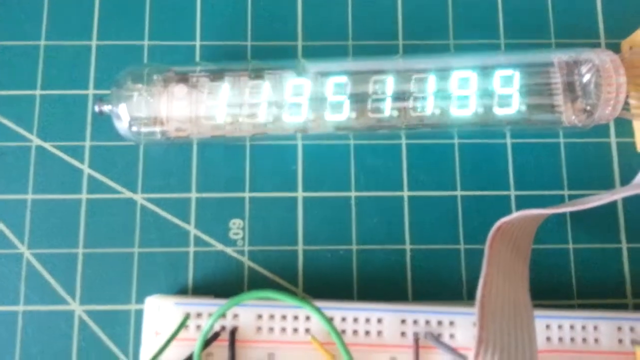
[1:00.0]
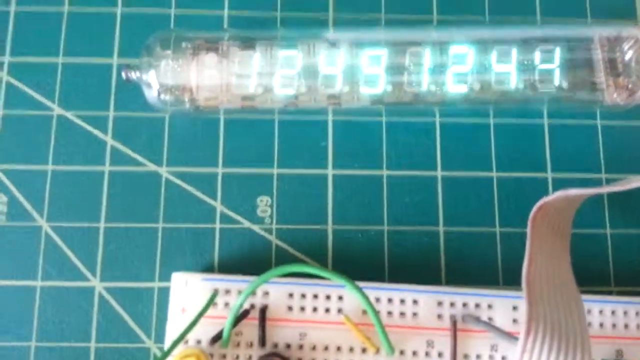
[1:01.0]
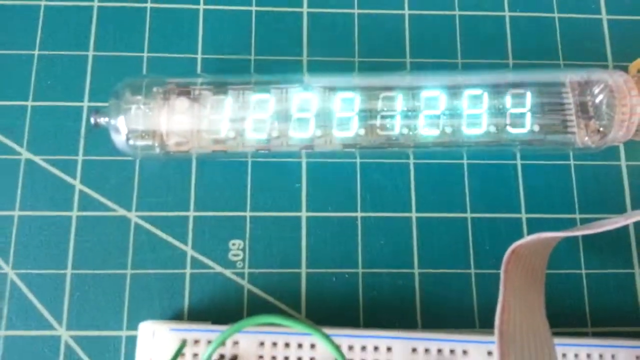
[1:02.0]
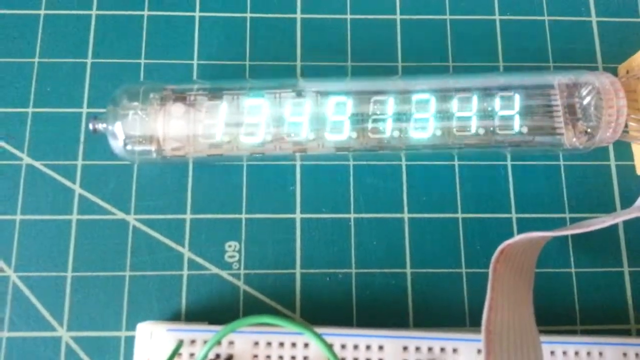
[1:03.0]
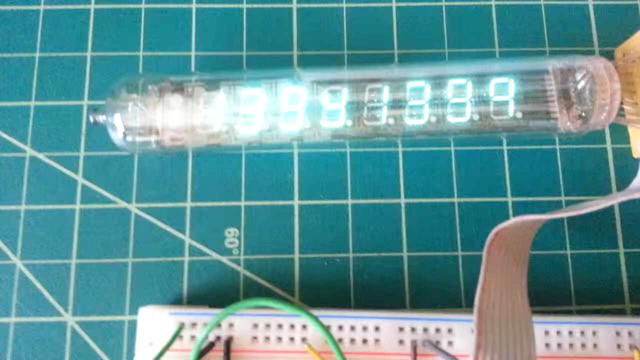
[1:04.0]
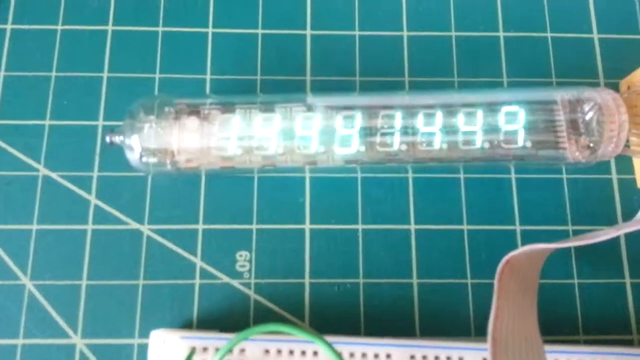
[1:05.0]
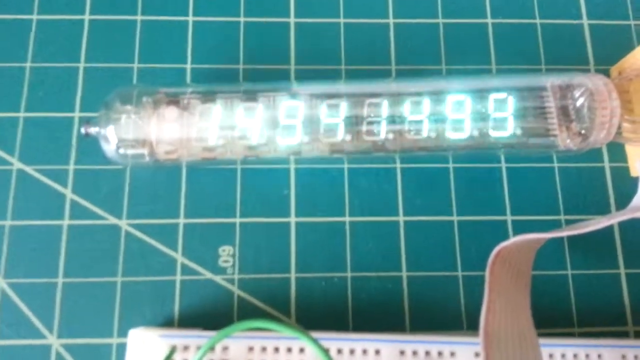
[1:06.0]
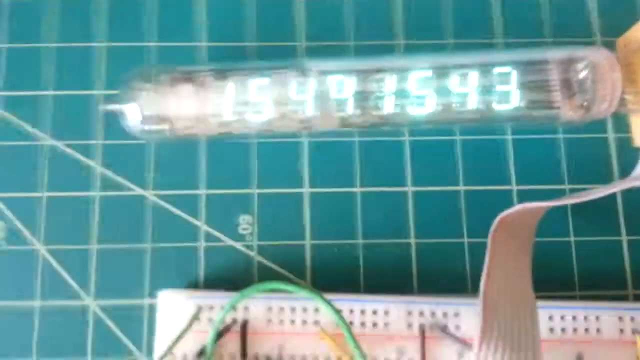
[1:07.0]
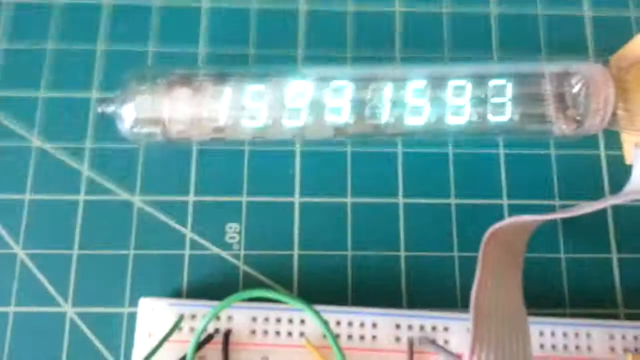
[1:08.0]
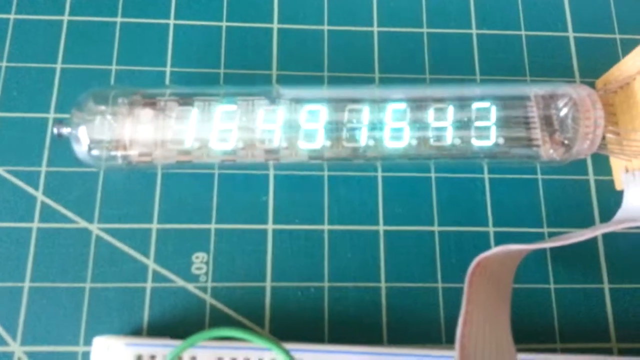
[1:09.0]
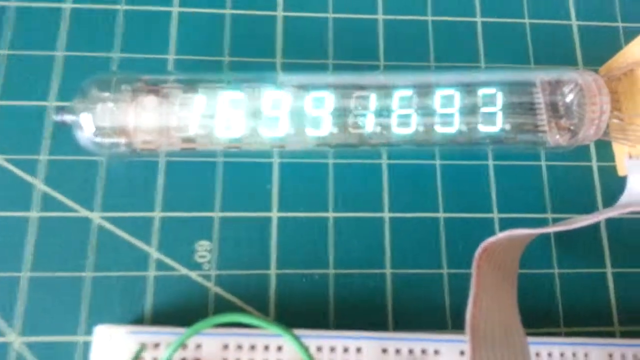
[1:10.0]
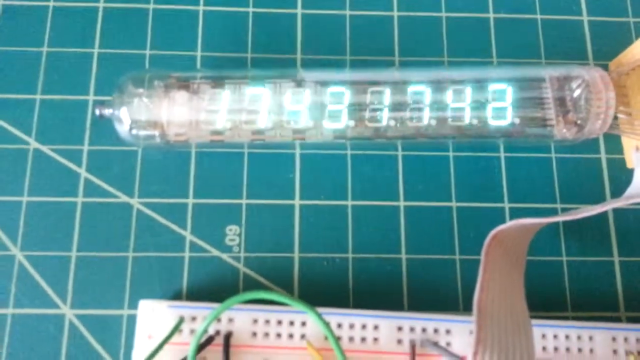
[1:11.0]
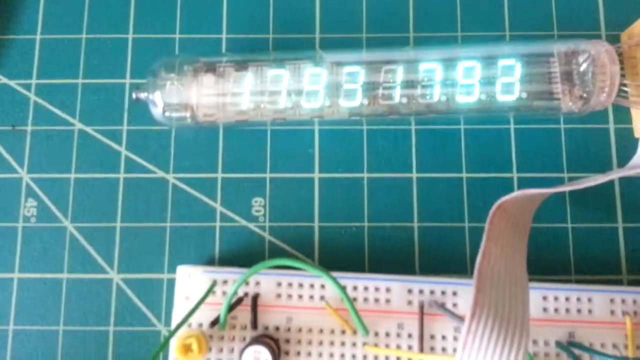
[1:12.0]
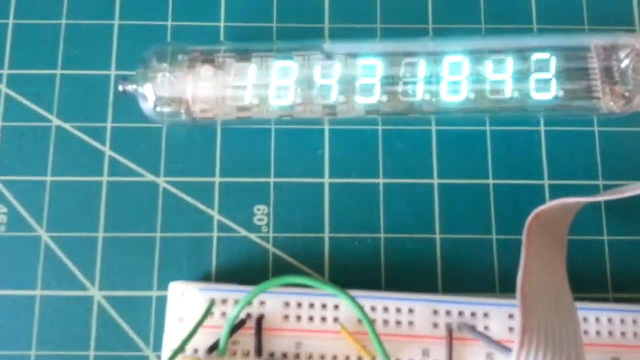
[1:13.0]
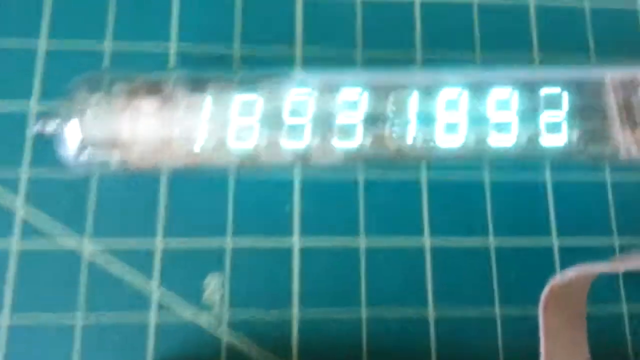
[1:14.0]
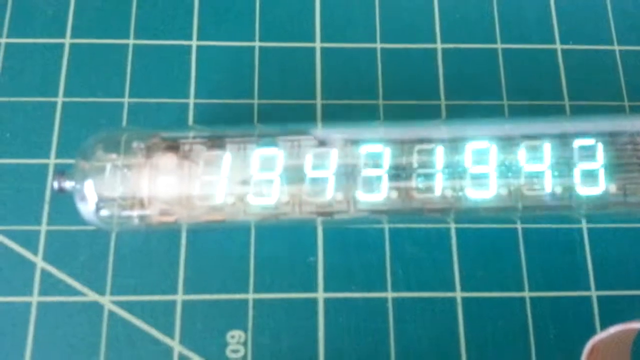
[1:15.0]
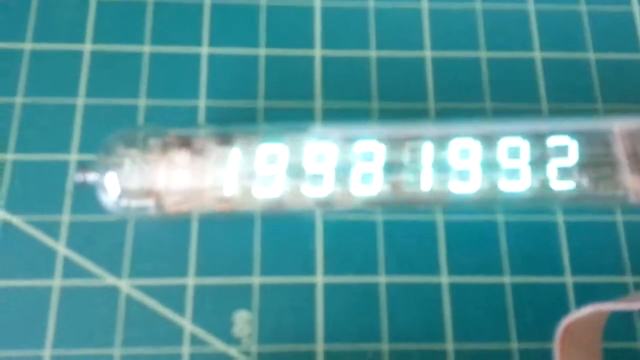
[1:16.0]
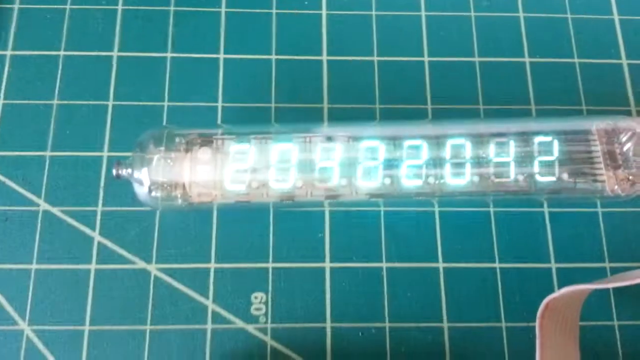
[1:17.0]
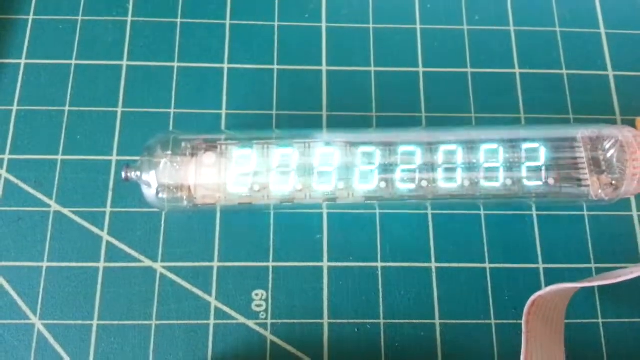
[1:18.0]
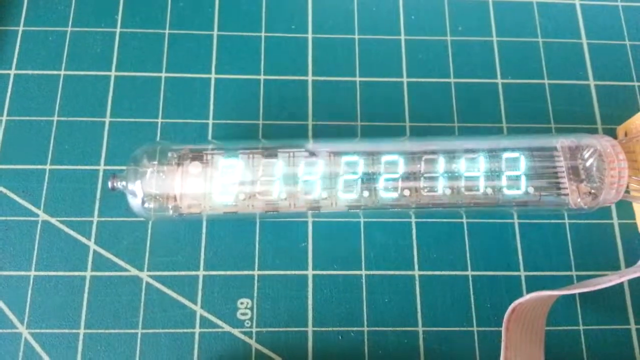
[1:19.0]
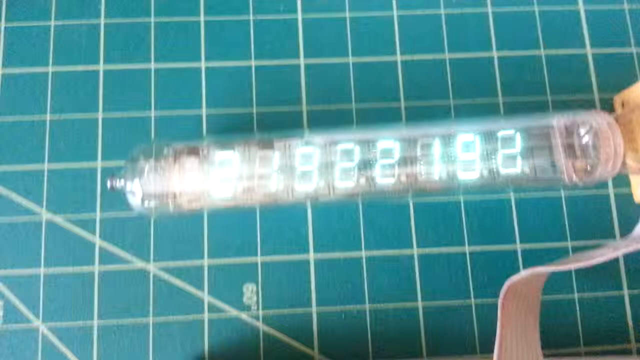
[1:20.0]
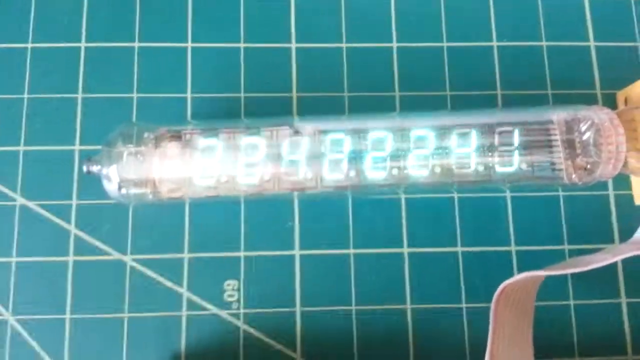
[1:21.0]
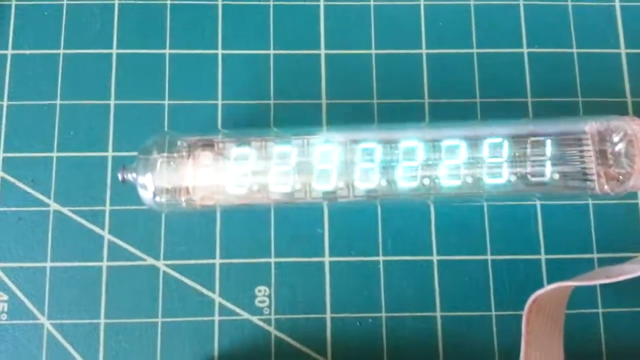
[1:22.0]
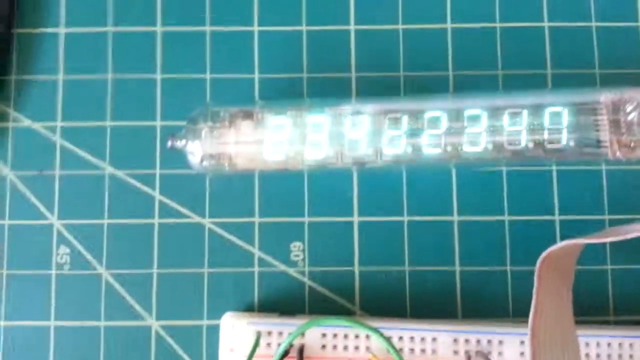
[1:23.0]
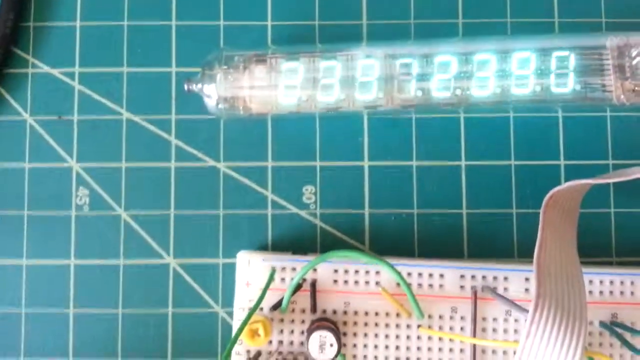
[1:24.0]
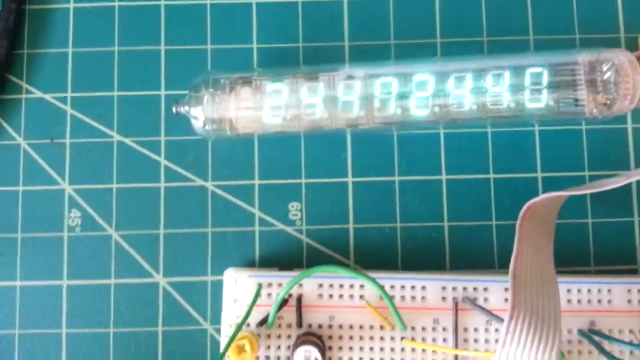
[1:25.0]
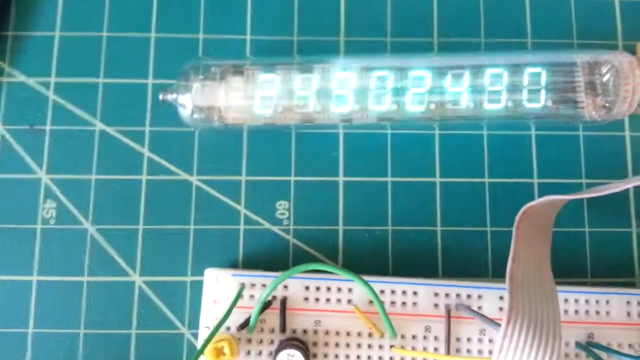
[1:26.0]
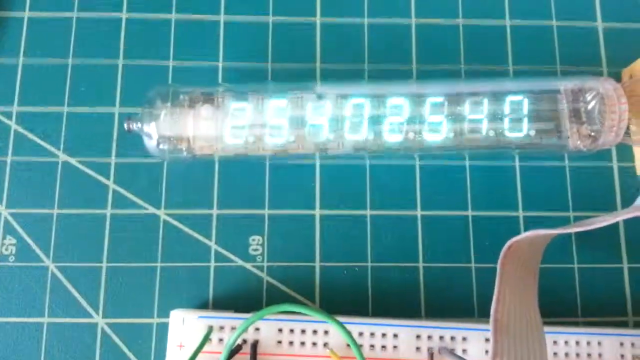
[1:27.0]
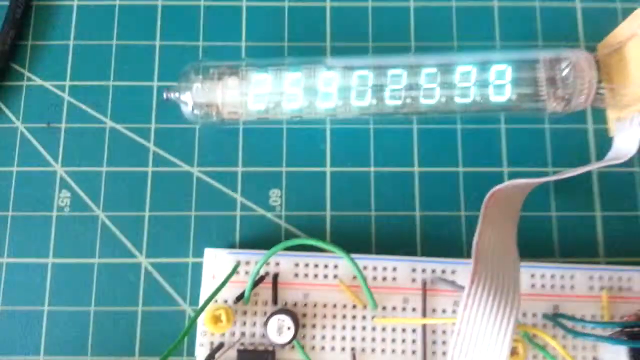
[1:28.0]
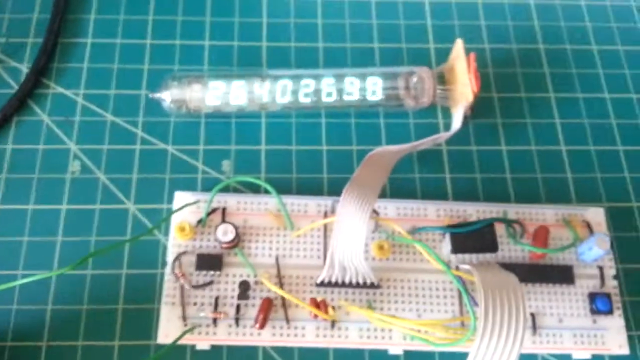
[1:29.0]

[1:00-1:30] The number keeps oscillating across a fairly wide range of values. It then seems to rise more steadily, through 230, 240 and 250, going up and up without stopping.